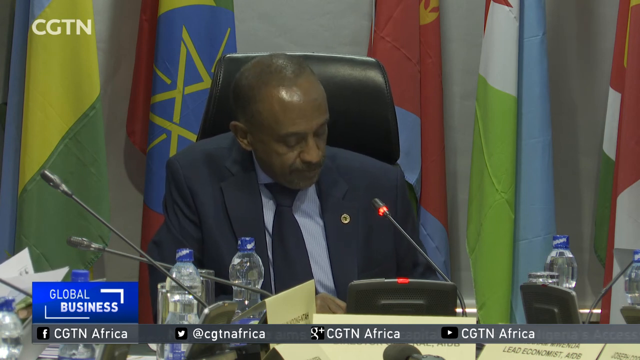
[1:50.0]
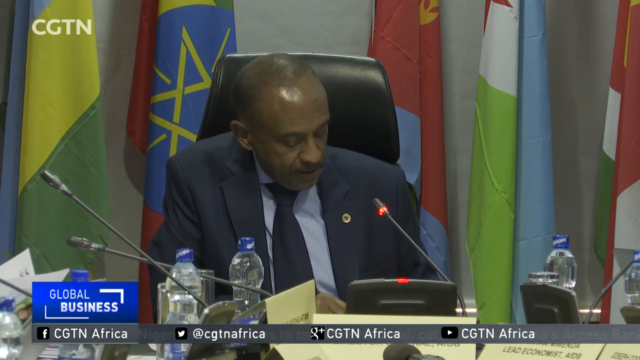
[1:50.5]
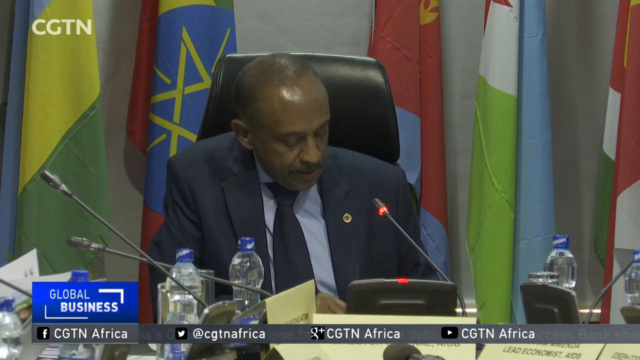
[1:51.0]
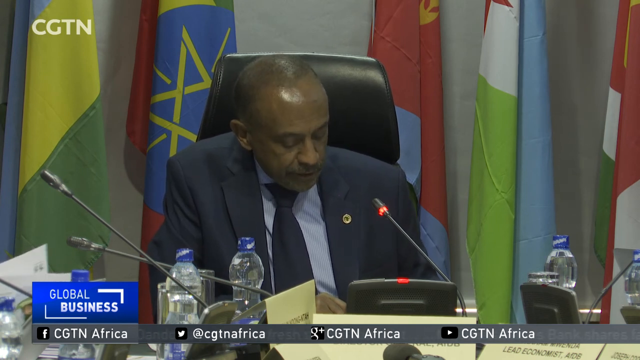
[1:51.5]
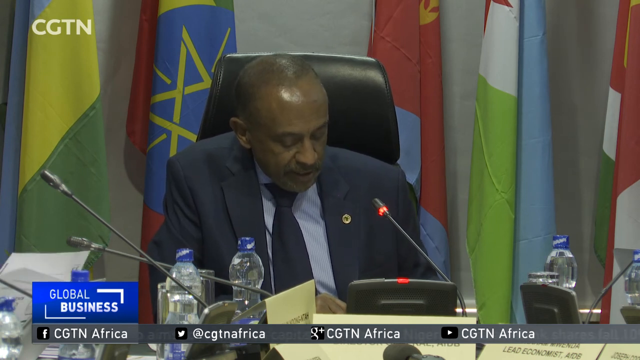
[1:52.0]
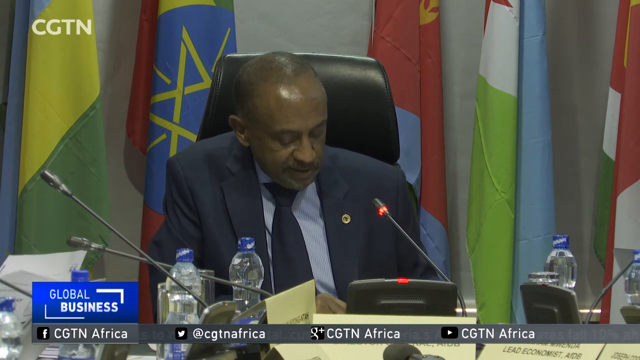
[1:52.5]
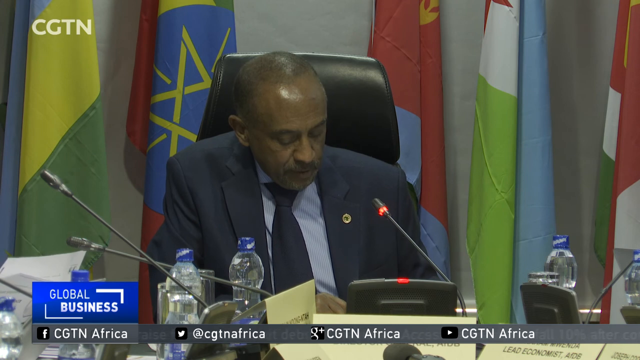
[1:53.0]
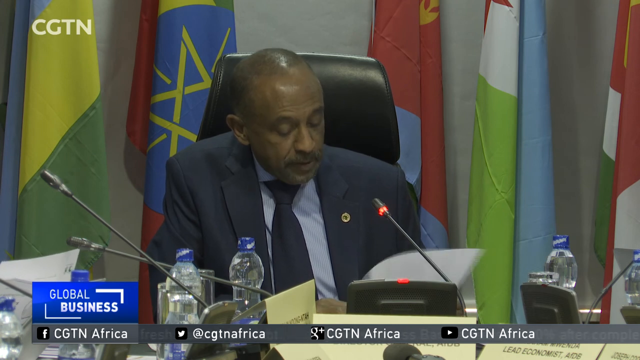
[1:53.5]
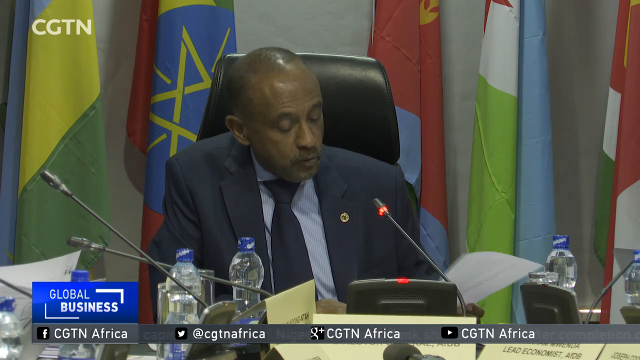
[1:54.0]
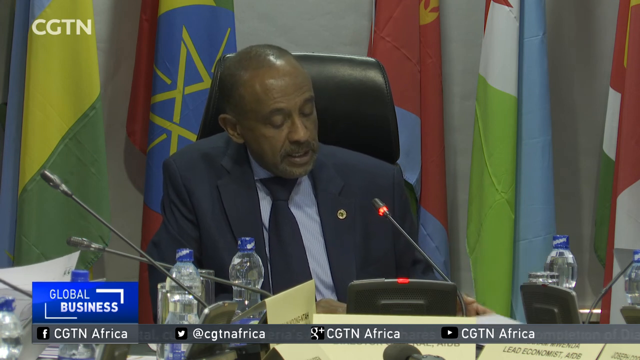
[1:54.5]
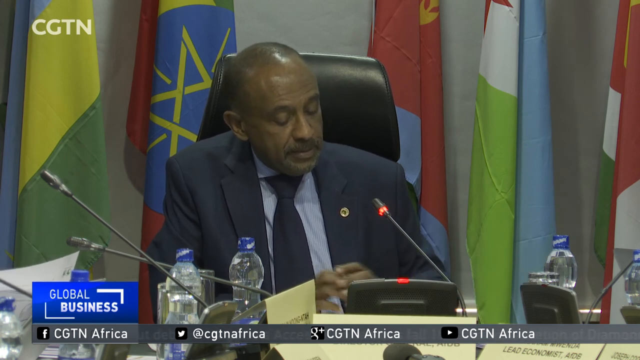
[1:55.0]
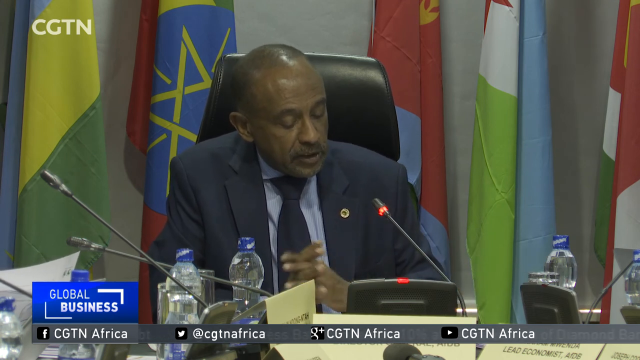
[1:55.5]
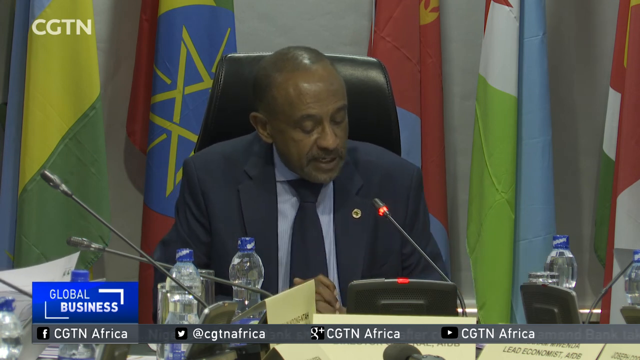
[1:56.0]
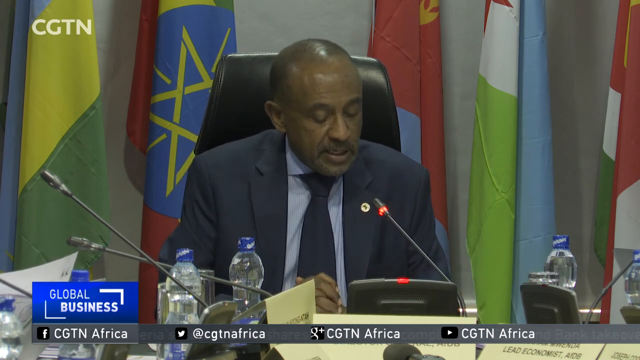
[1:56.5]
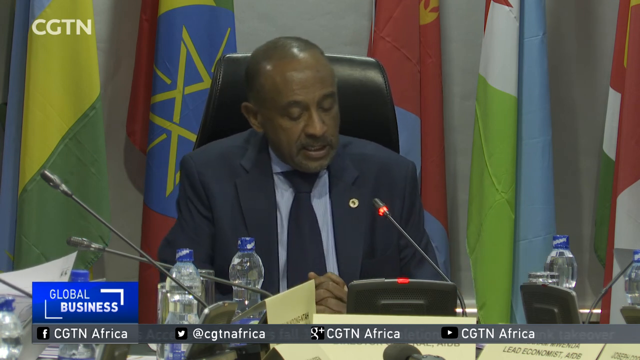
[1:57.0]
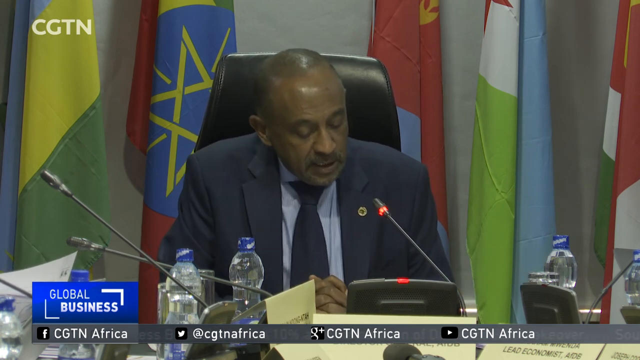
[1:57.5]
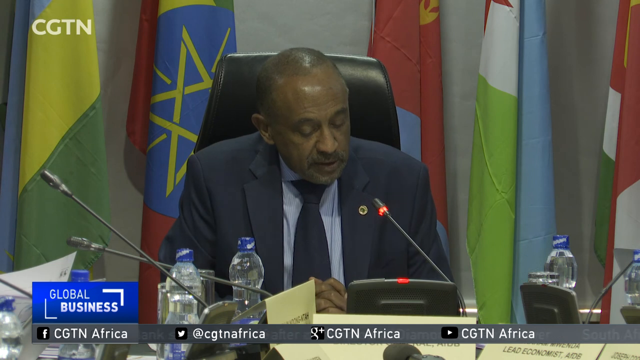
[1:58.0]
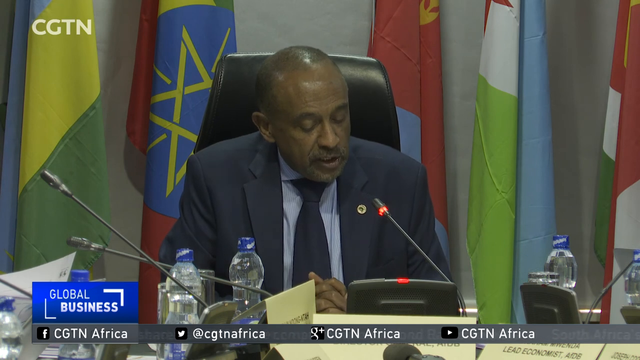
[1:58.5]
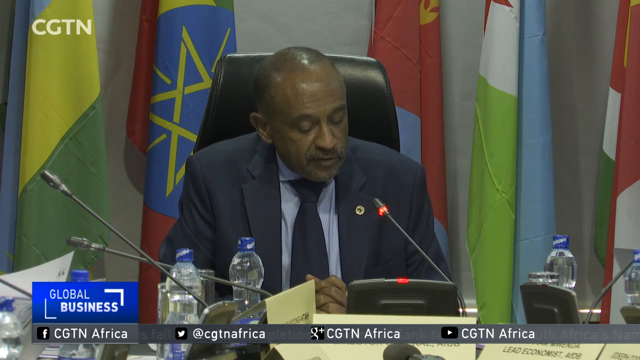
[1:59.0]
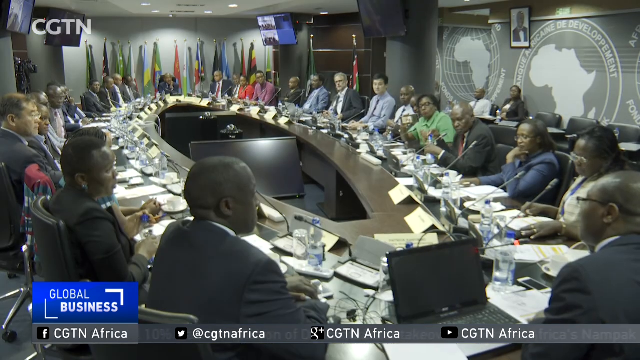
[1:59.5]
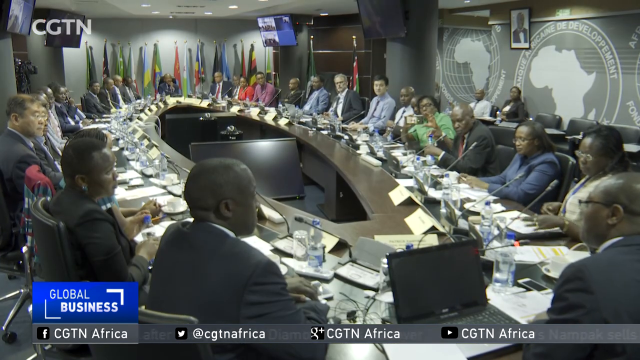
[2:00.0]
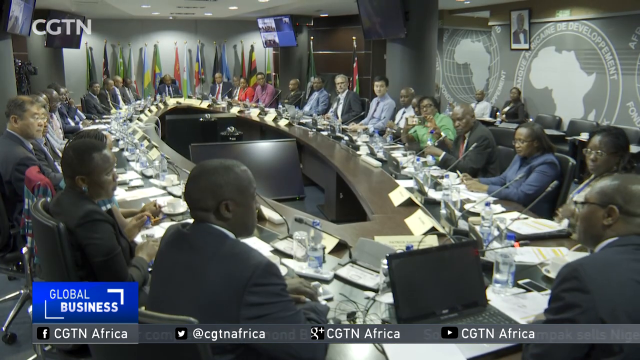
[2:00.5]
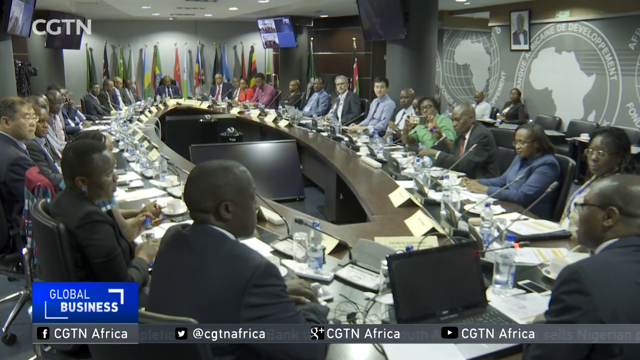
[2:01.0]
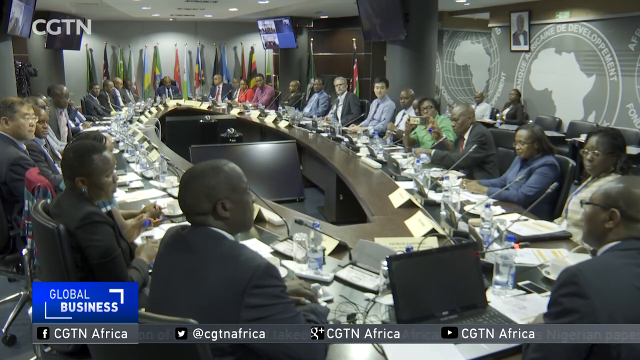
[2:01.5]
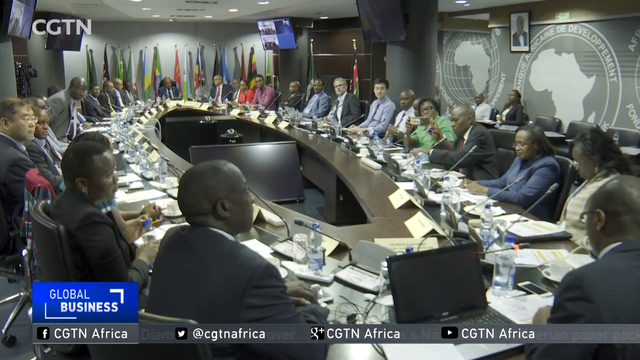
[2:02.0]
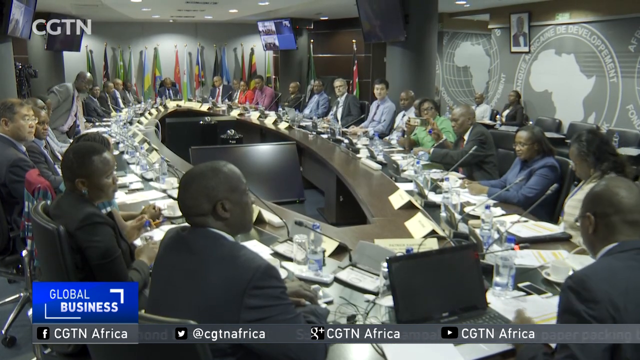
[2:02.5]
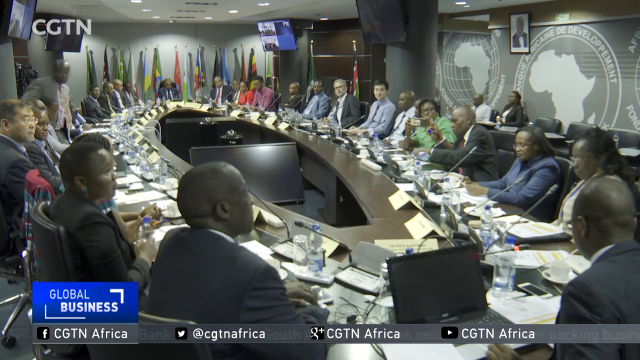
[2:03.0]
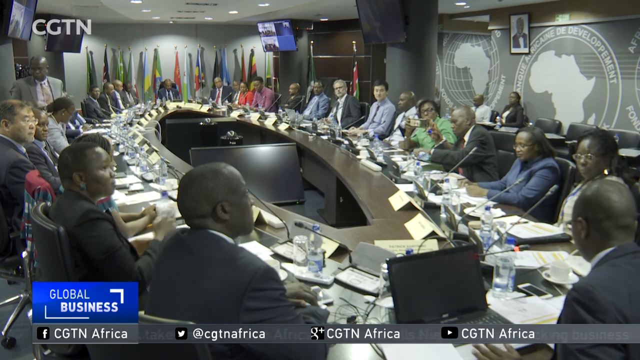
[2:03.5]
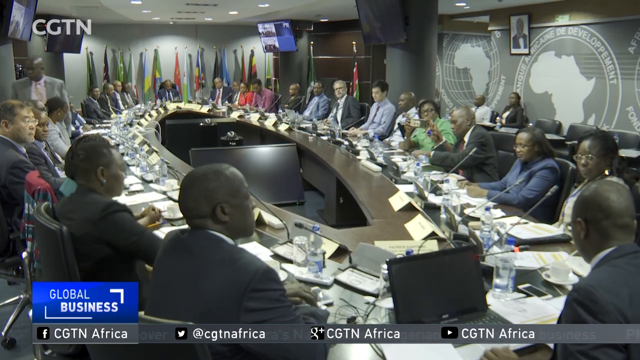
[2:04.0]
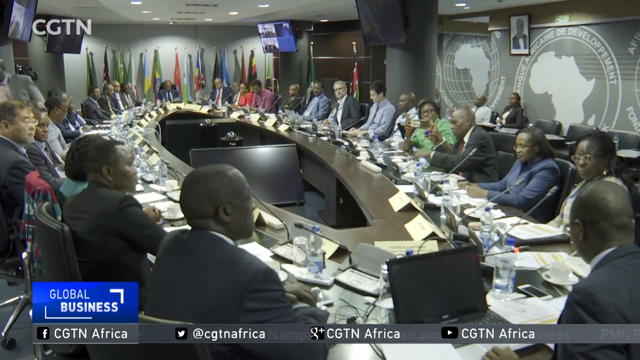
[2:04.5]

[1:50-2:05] The man continues to speak, then turns his page over; the paper flips up and out as the next page comes into view. On the left side, the papers being ruffled move quite quickly. Once on the new page, he clasps his hands together again with fingers interlocked and shifts position slightly, as if getting comfortable in the chair. The scene then changes to the large table, which is oval, shaped like a rugby ball, with a hole or cut-out in the centre. Delegates from various East African nations sit all the way around it, probably about fifty people. On the right side of the back wall are images of Africa with a logo around them, and flags are behind the top of the table. Each member has a name card, water, notebooks and paper. Most of the delegates look toward the chair on the right side, who has an iPhone on his desk and is possibly speaking.